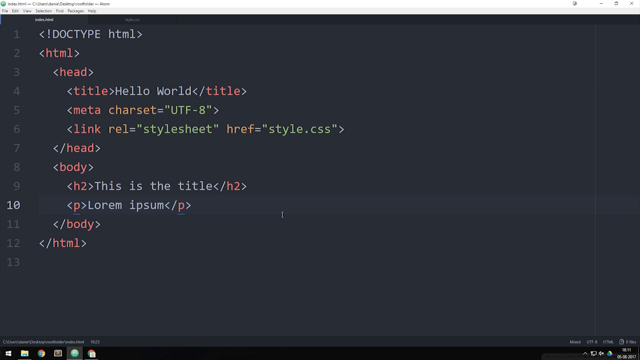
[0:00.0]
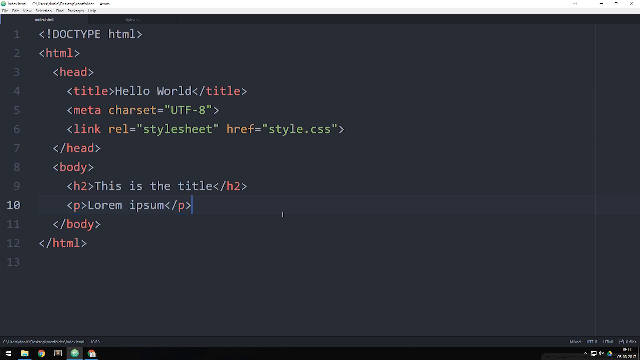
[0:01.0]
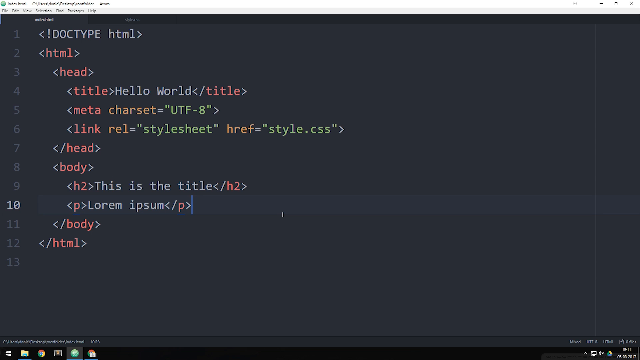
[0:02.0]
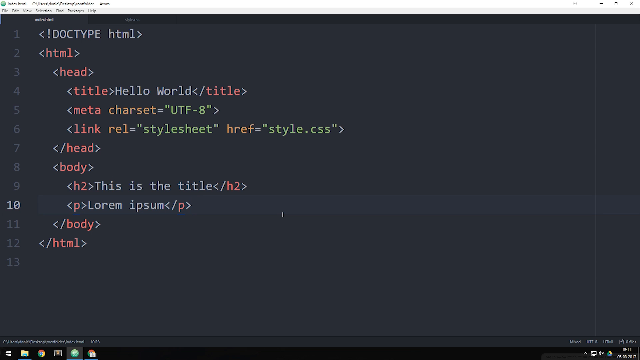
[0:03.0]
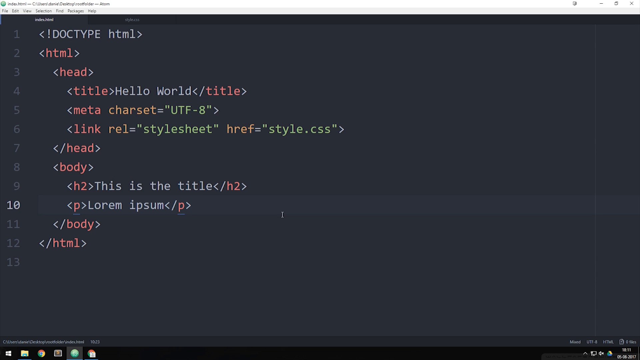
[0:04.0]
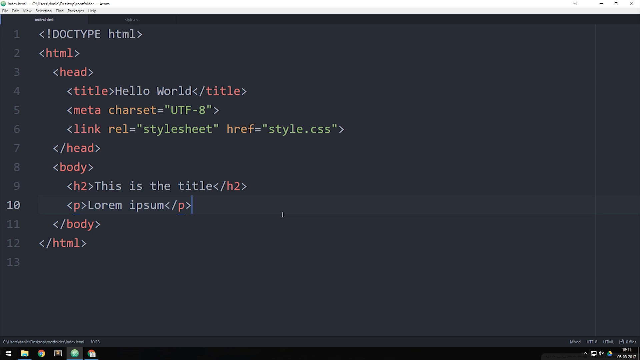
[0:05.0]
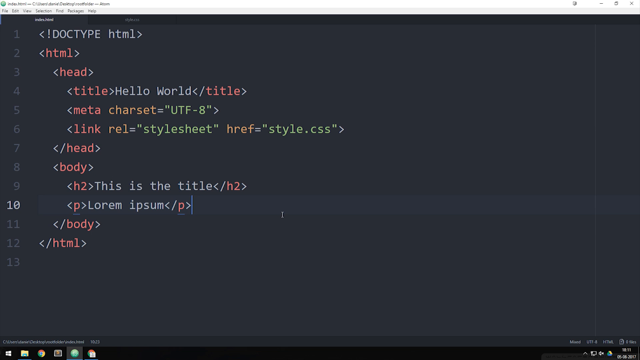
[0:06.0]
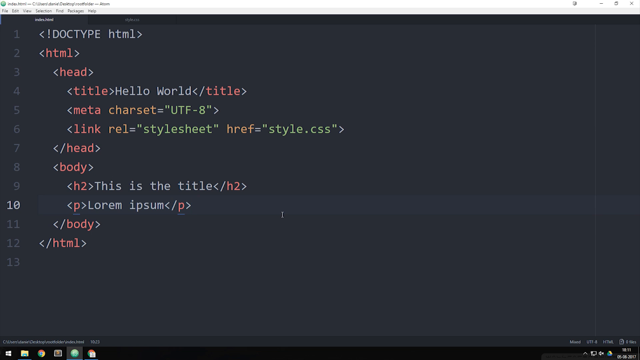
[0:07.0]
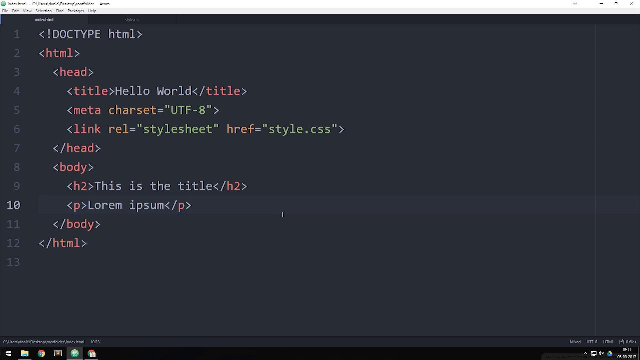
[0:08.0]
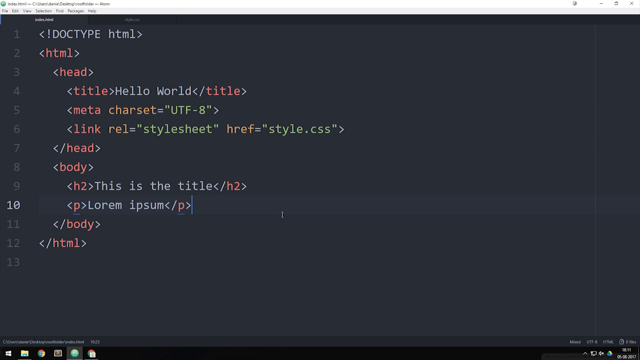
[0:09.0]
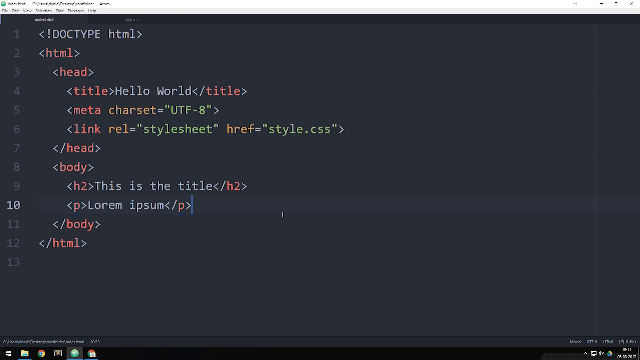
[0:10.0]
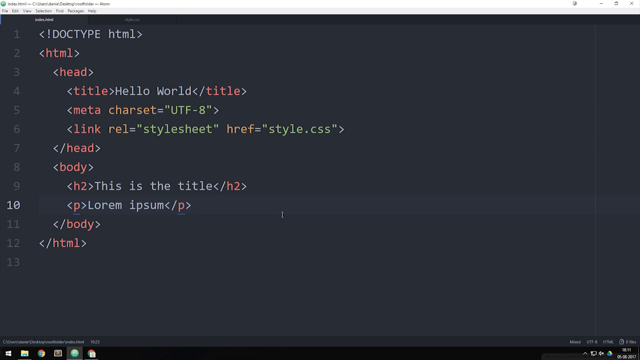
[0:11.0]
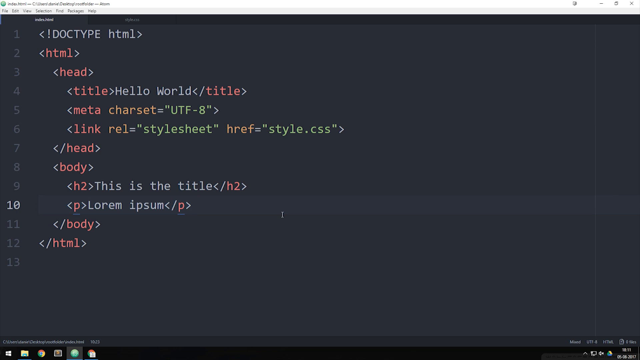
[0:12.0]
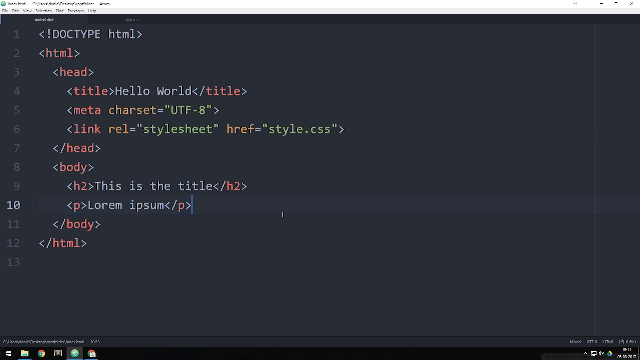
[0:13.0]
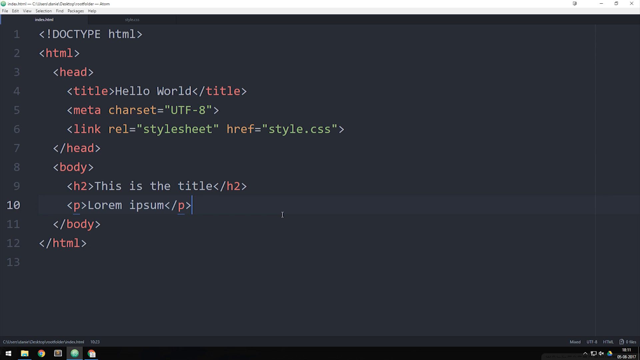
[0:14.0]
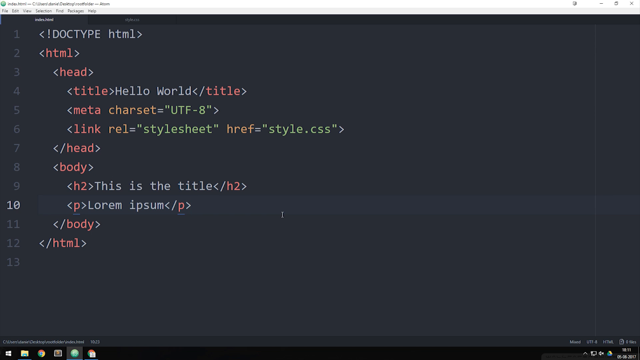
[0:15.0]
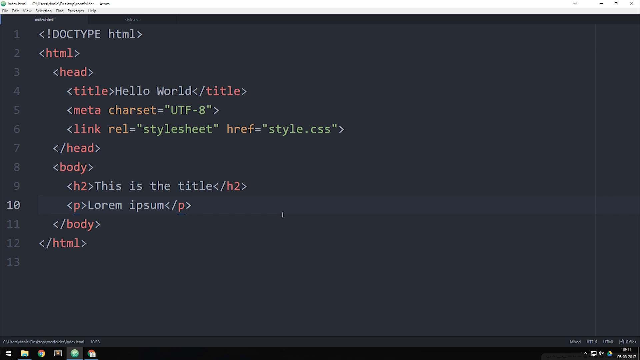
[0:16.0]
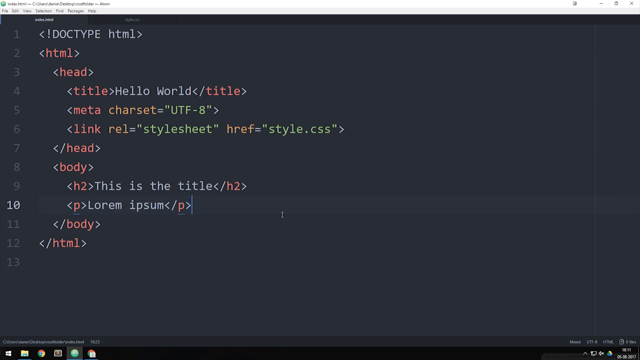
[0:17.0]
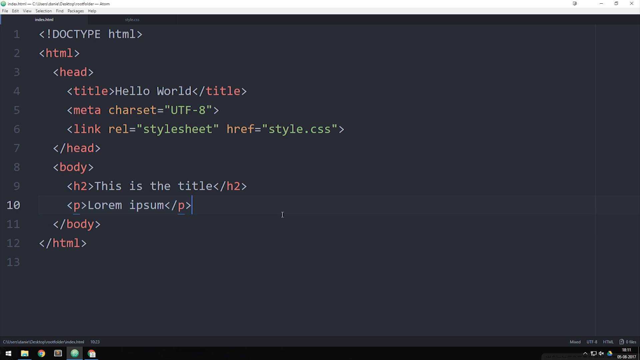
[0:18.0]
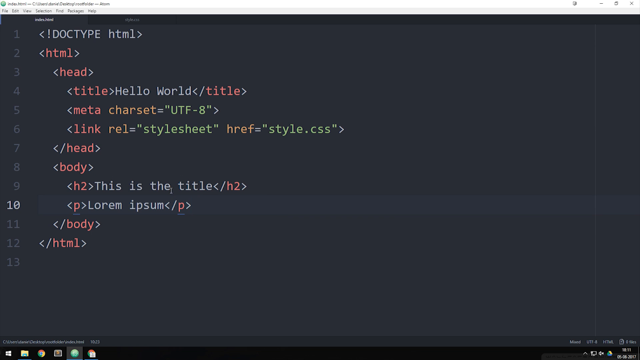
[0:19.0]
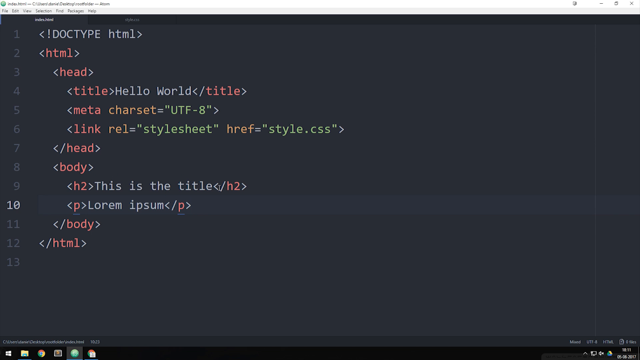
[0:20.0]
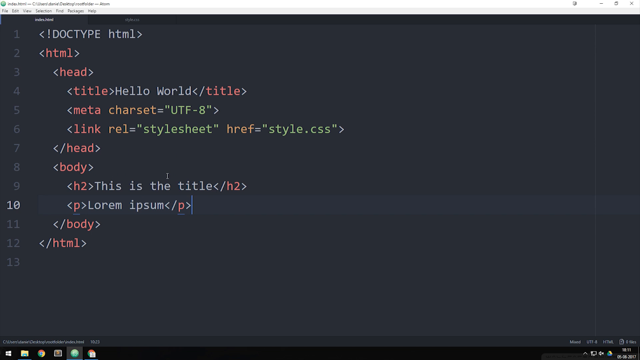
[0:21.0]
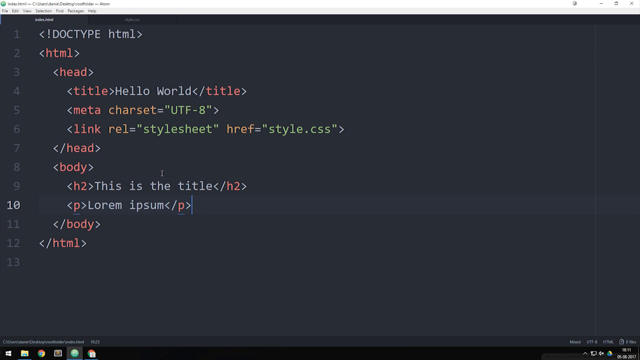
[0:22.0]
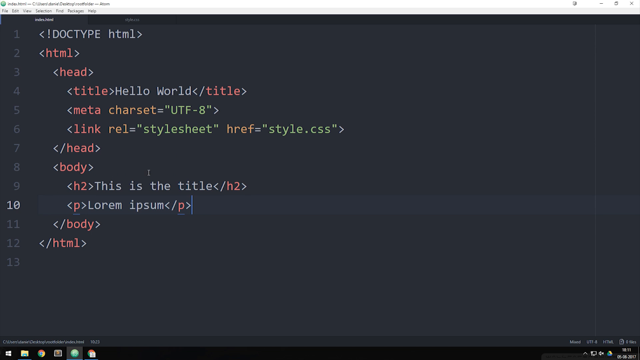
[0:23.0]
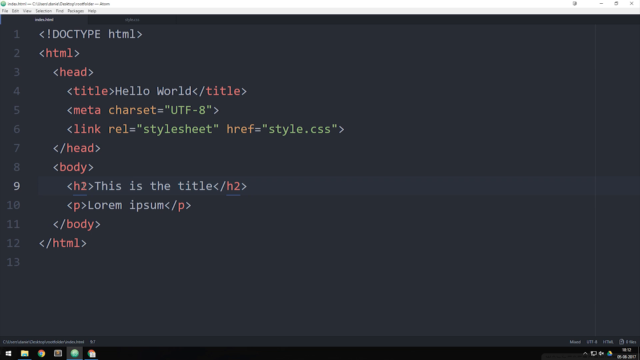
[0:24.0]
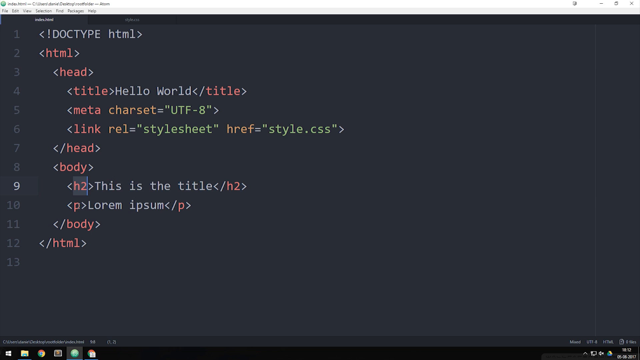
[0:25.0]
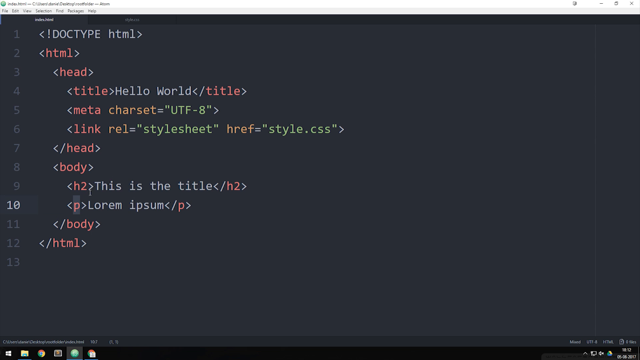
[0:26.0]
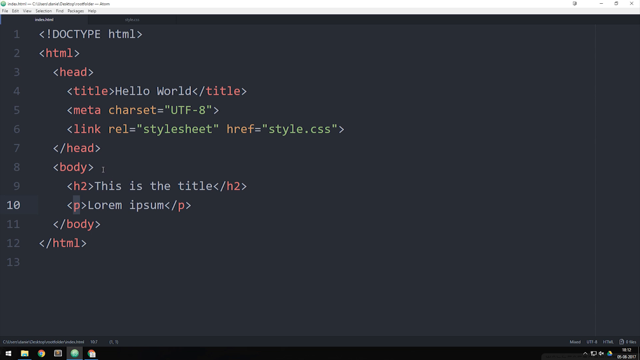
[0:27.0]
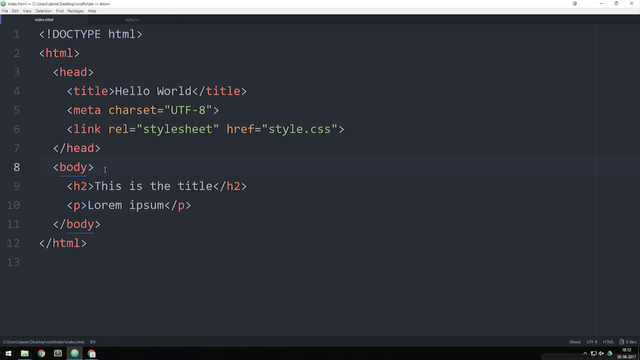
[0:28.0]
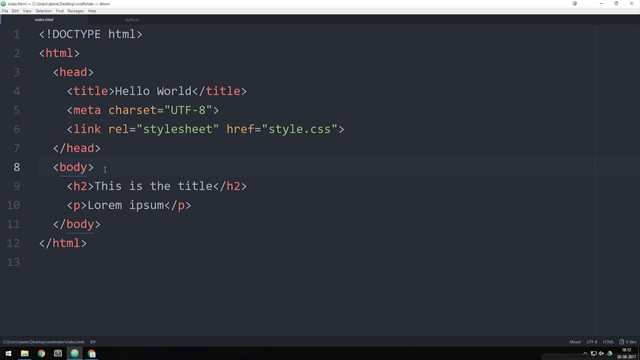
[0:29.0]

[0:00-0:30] The video begins with some code that looks like code for a website. At the very top it starts with "doc type" and underneath that "html", followed by a head, a title reading "hello world" and the title again, a meta char set, a link, a body and then a closing. The code stays on the screen for a while. A text cursor near the body portion, right after a section that says "lorem ipsum", blinks there for a while. A mouse cursor then moves across the screen: it goes to where H2 is and highlights it, then goes to the P and highlights it, and then moves to the section that says body. The body section says "this is the title".